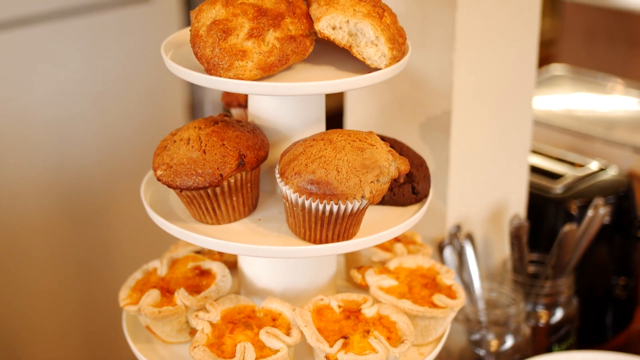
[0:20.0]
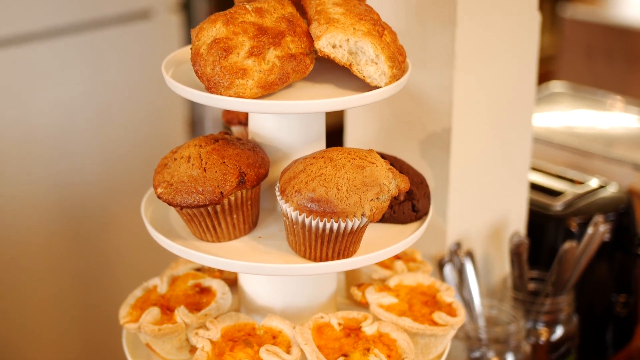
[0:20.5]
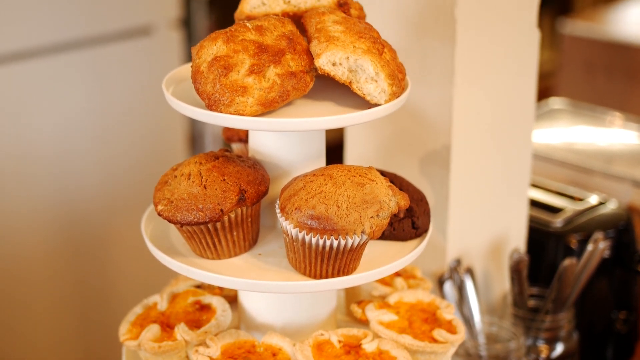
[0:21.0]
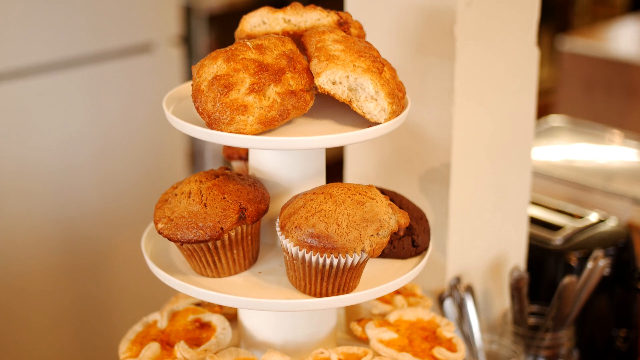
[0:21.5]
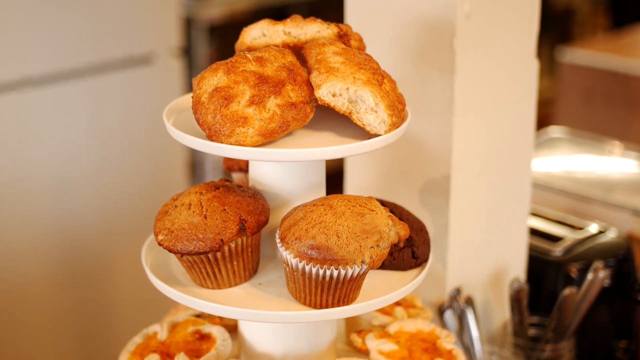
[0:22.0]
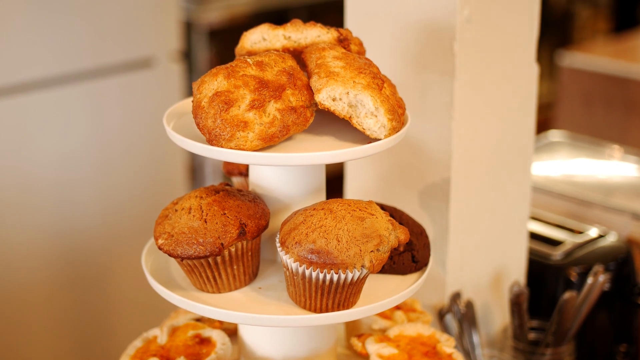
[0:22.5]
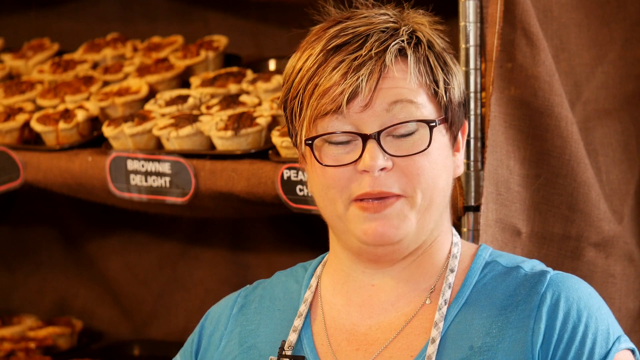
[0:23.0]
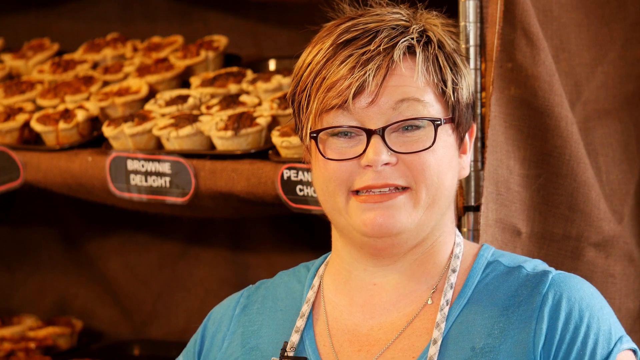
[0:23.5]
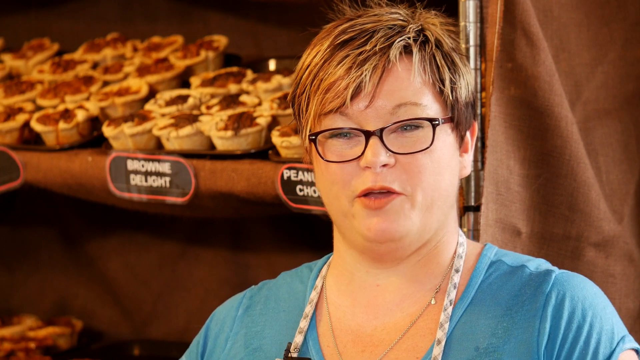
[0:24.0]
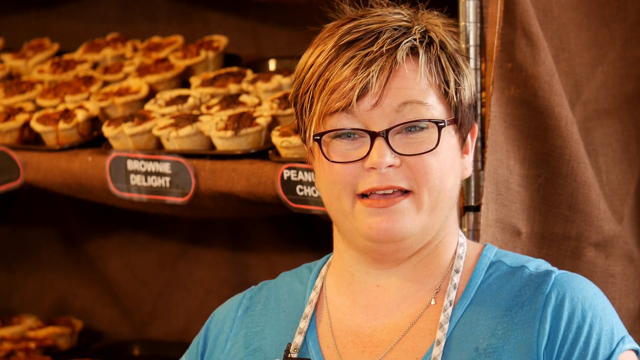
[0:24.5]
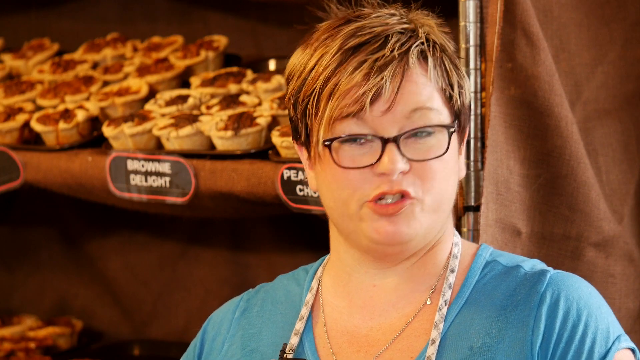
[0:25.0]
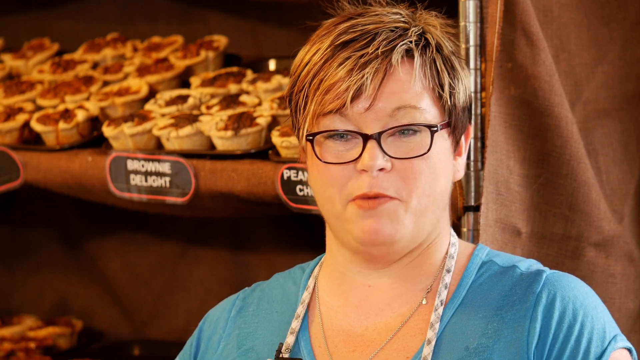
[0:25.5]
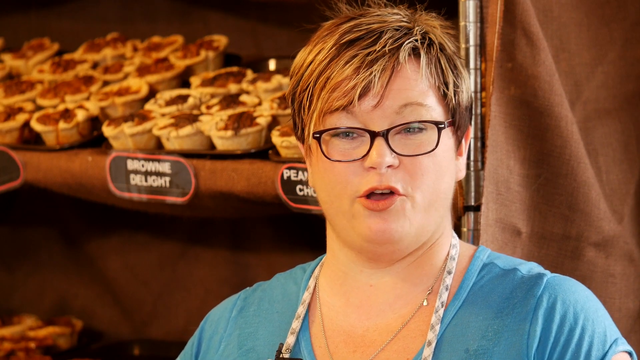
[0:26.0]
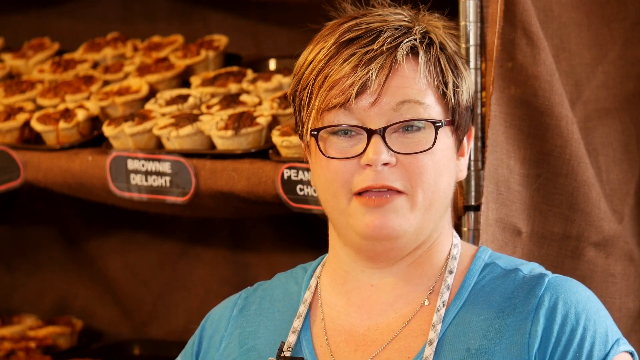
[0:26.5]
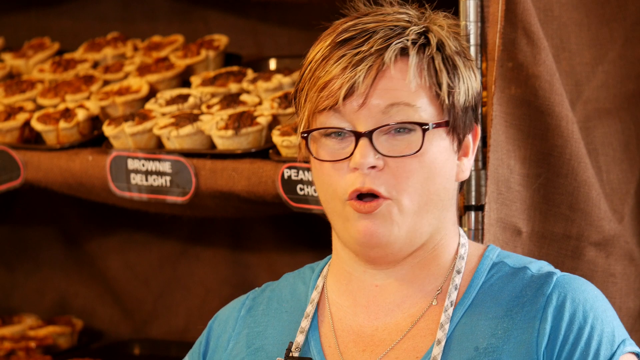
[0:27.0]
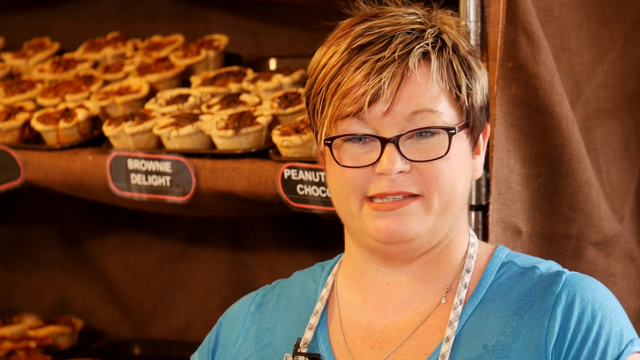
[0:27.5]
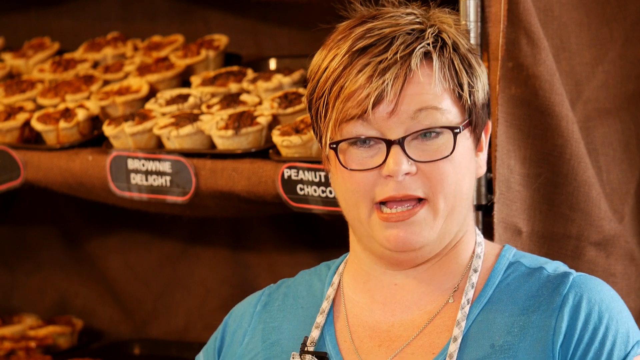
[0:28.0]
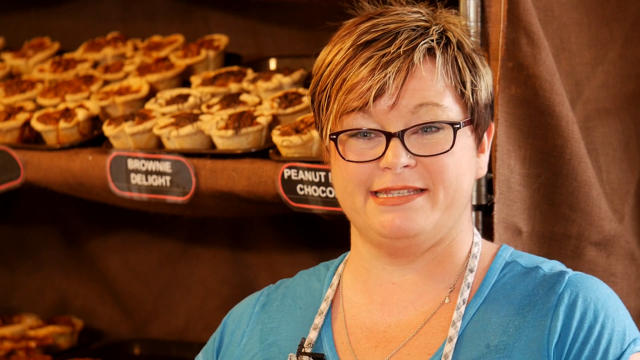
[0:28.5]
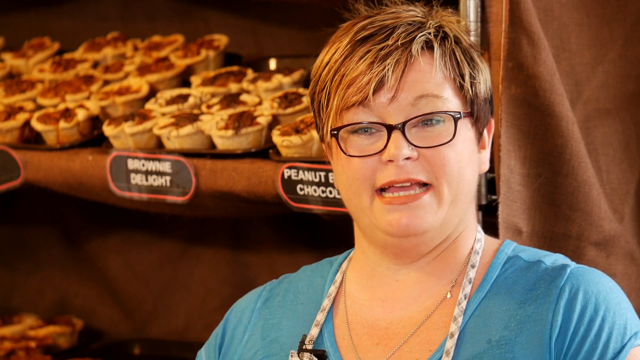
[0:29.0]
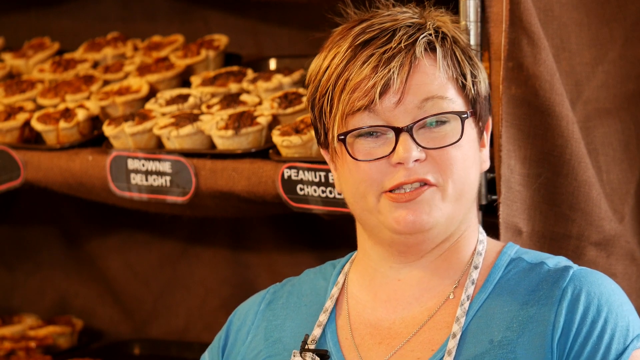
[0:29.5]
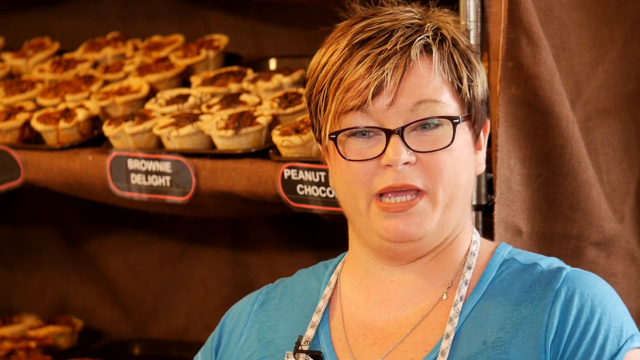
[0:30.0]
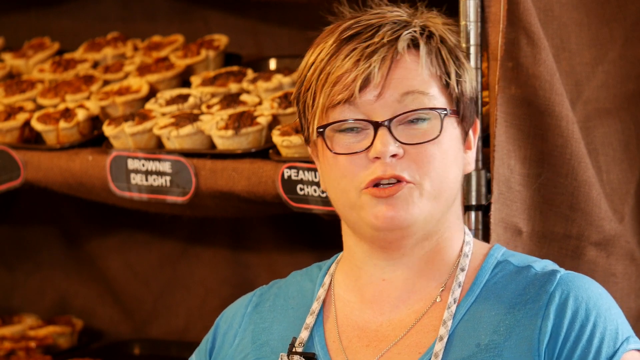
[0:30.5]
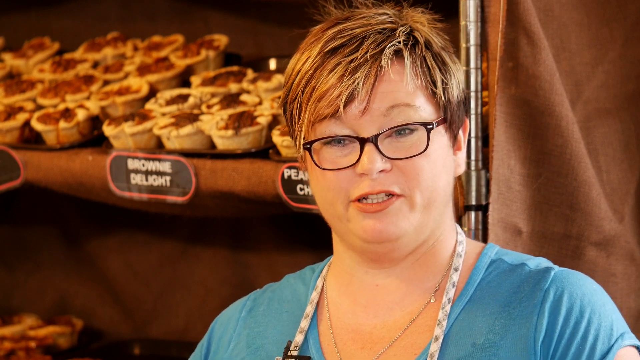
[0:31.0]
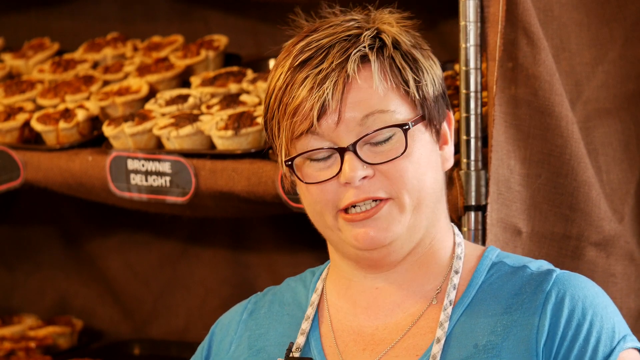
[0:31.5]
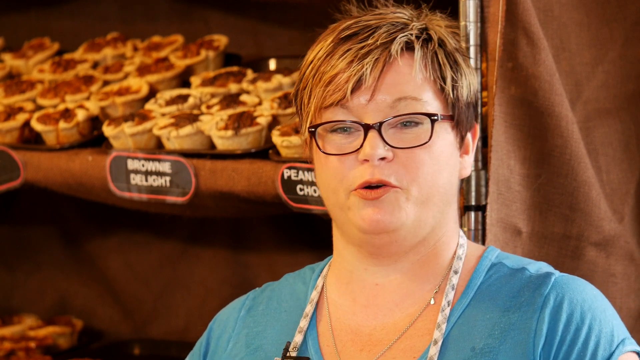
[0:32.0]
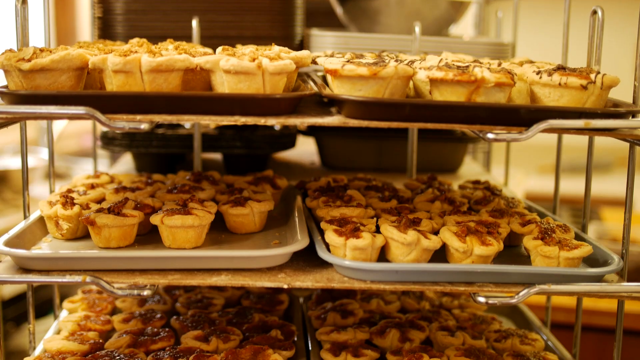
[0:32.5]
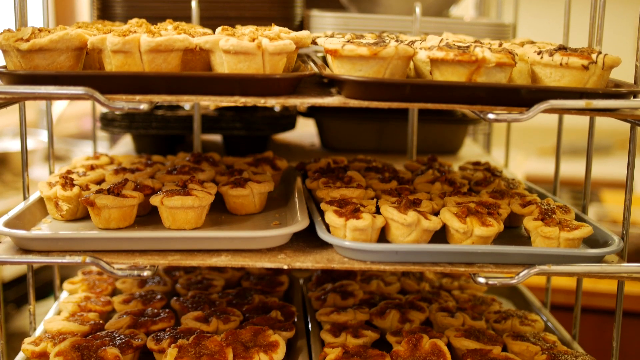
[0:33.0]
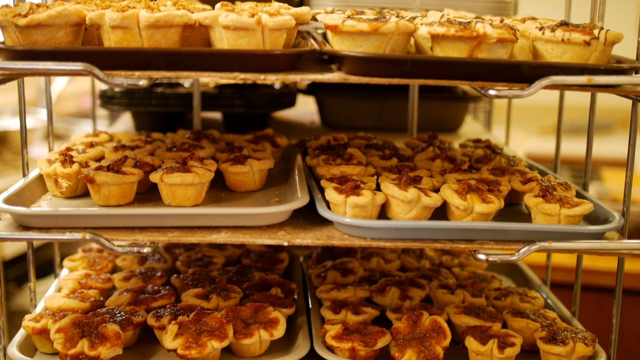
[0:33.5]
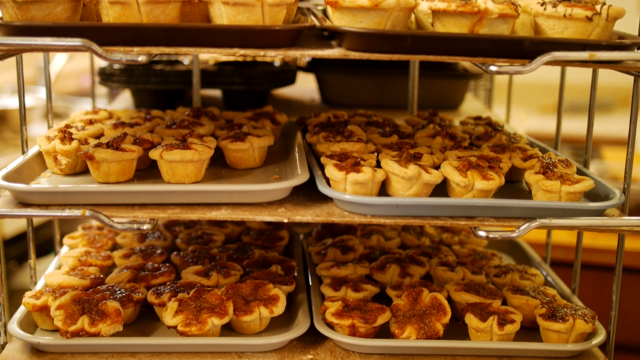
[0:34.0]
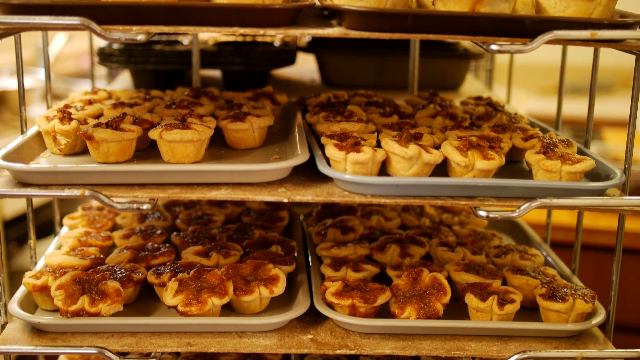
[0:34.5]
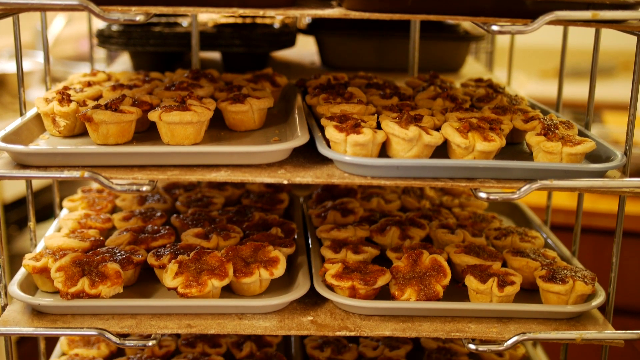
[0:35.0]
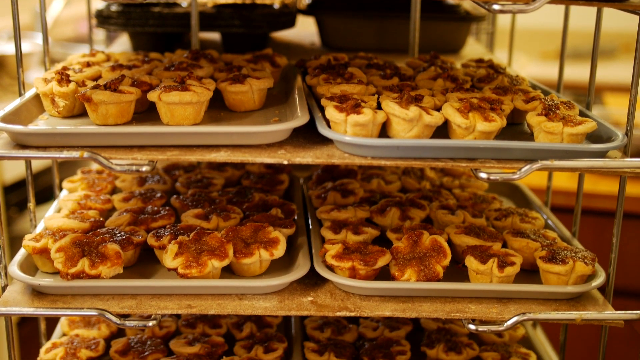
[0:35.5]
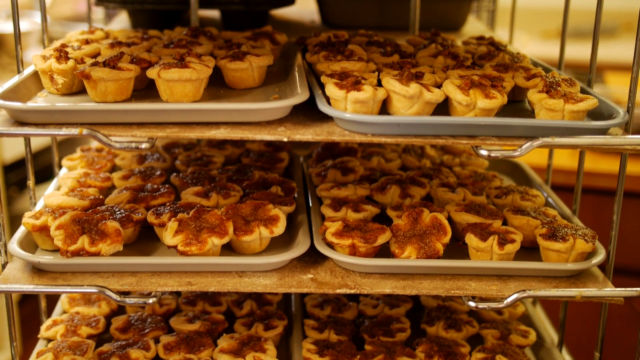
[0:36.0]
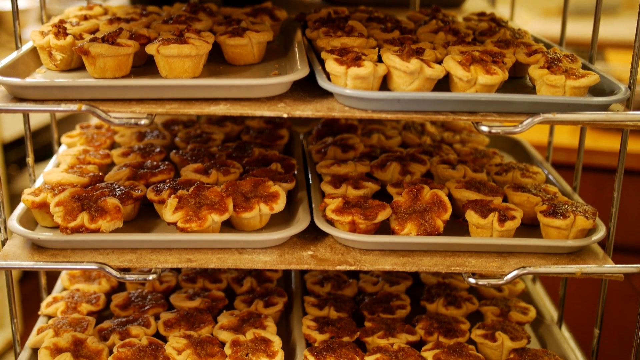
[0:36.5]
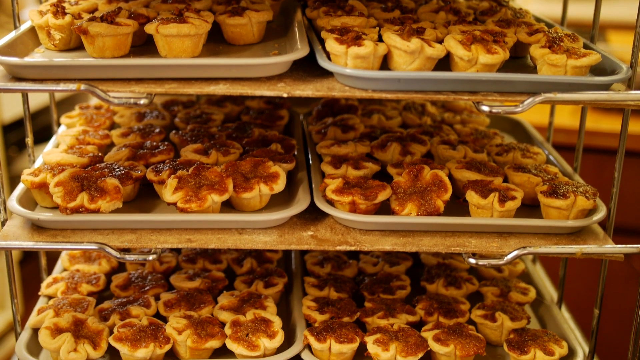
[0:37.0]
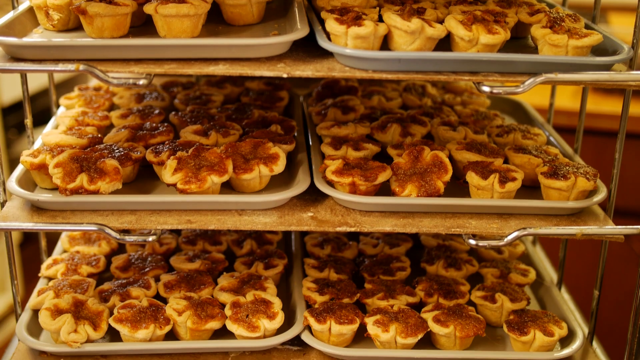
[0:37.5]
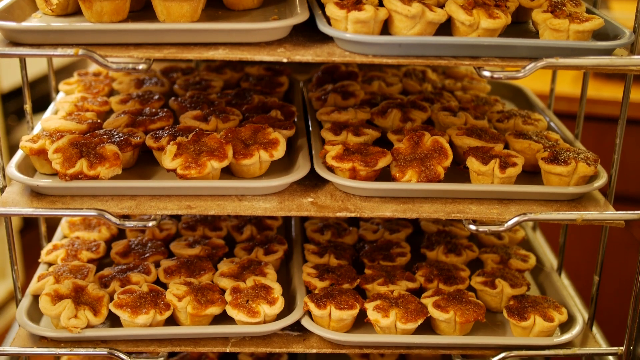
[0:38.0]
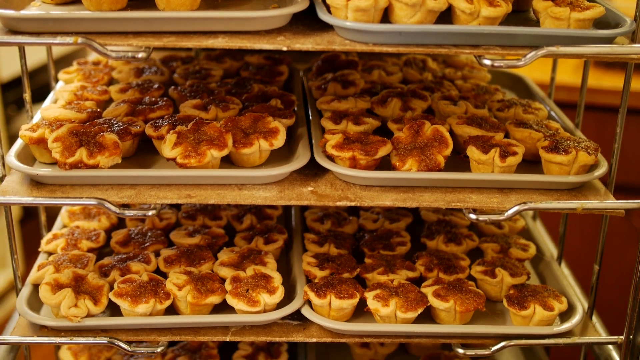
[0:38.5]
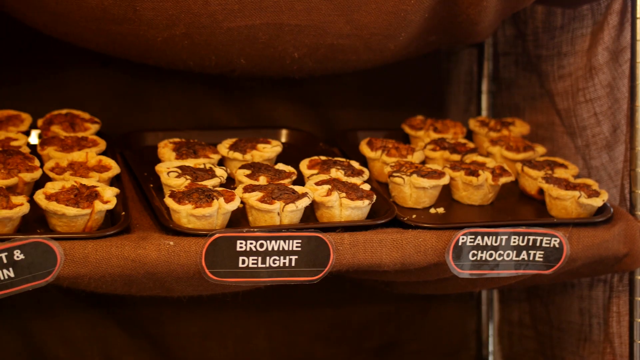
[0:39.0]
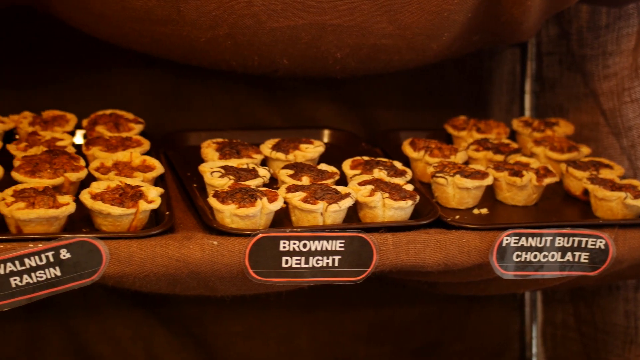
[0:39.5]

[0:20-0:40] Many different types of cakes or cupcakes that have been baked are displayed; some are nicely decorated, and they look nicely organised. A woman with short brown hair, wearing lipstick, a pretty shirt and an apron, takes a selfie with a camera that she is turning. There are a great many baked goods.